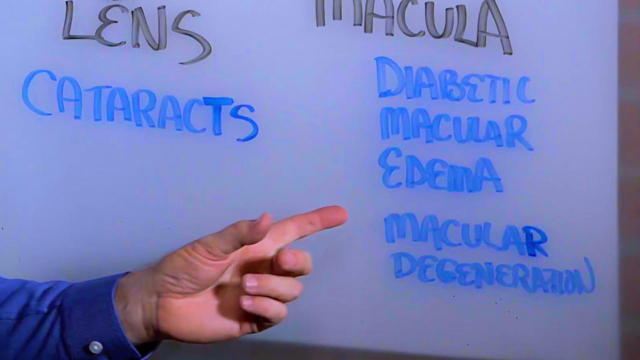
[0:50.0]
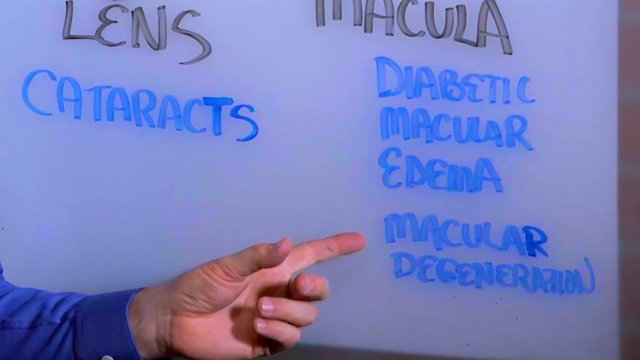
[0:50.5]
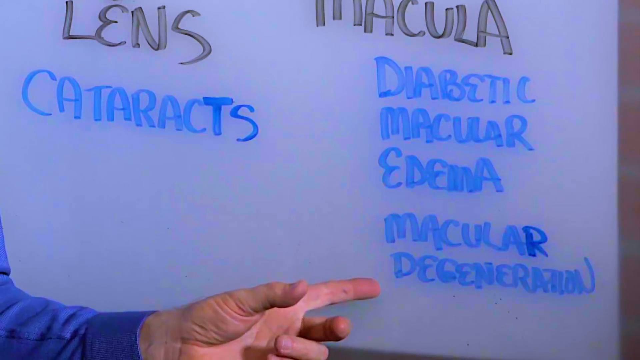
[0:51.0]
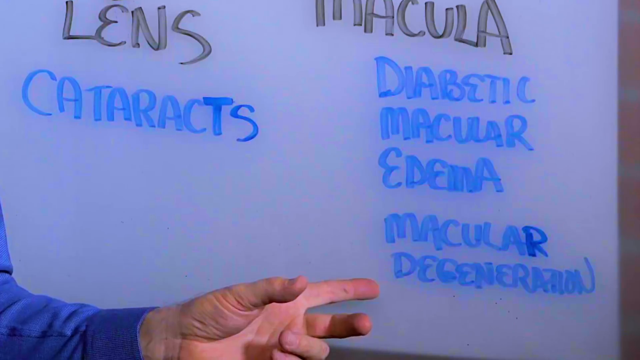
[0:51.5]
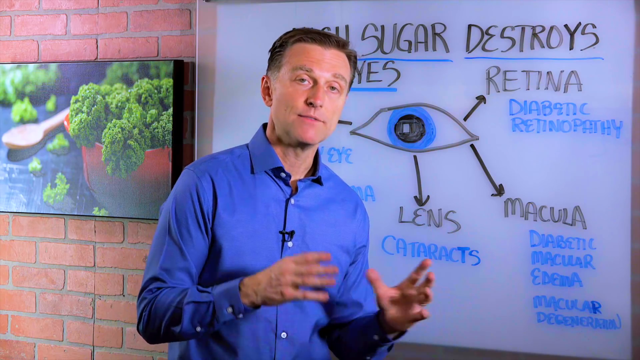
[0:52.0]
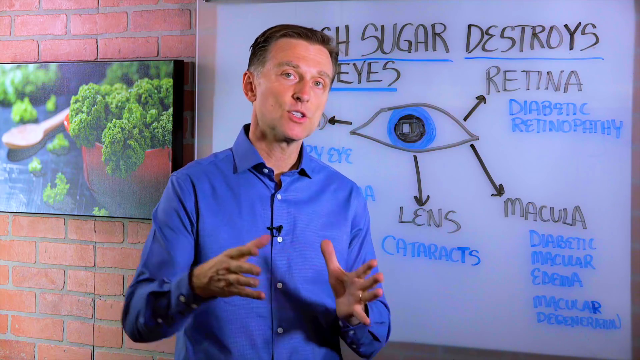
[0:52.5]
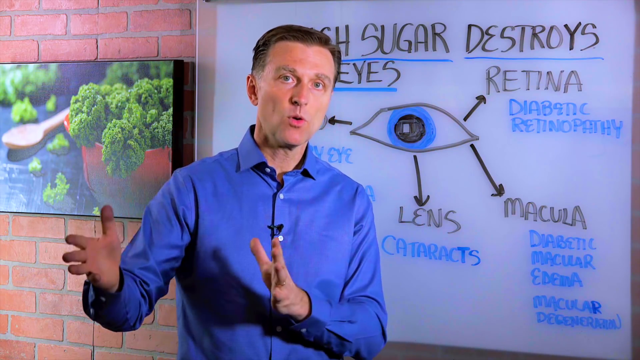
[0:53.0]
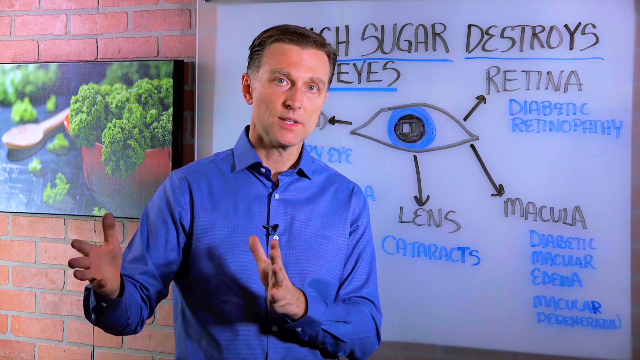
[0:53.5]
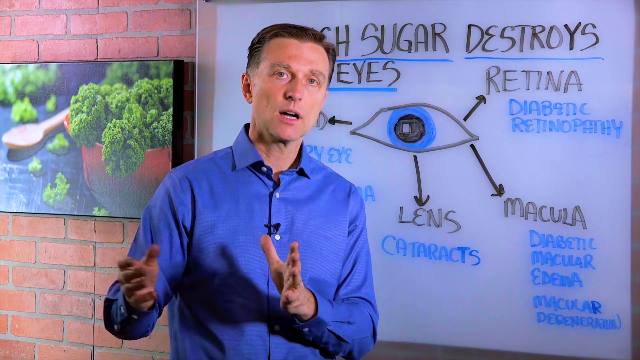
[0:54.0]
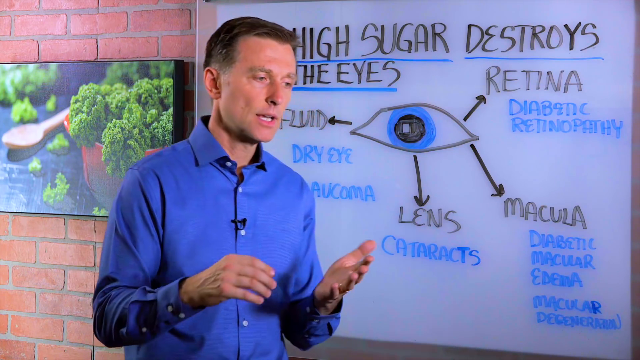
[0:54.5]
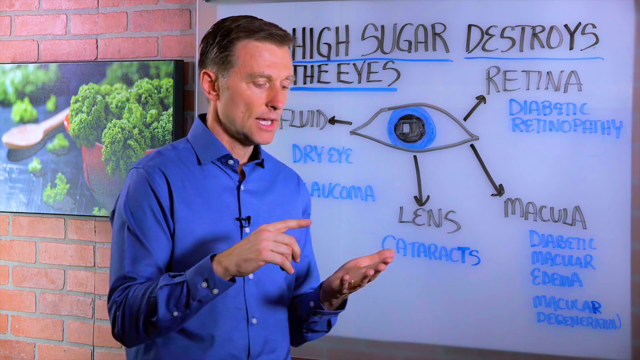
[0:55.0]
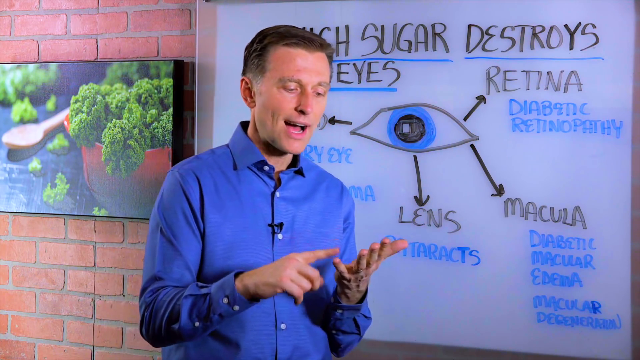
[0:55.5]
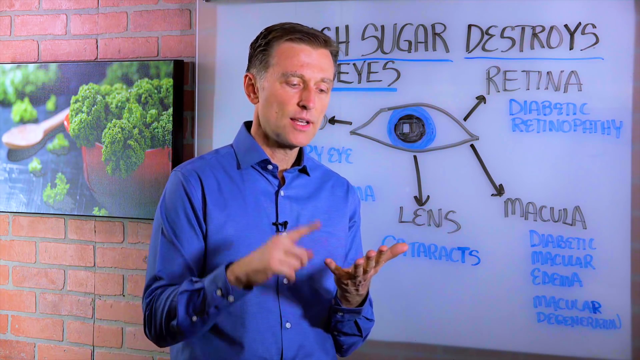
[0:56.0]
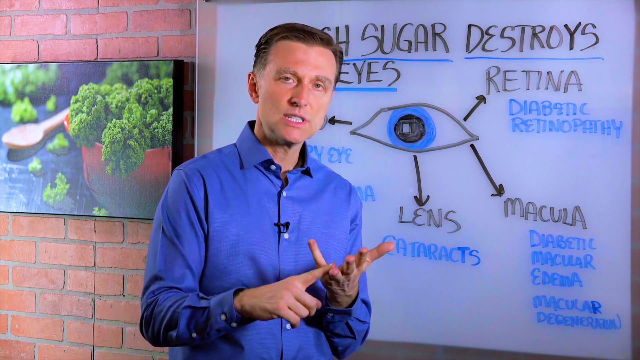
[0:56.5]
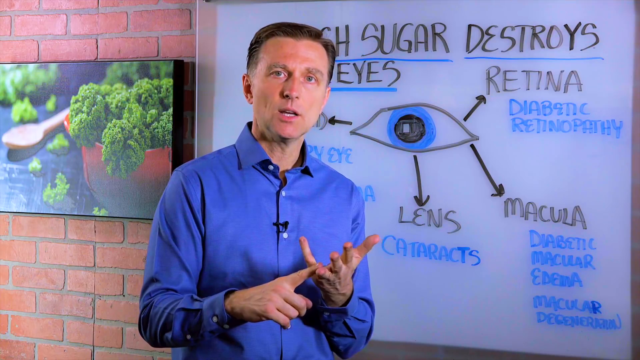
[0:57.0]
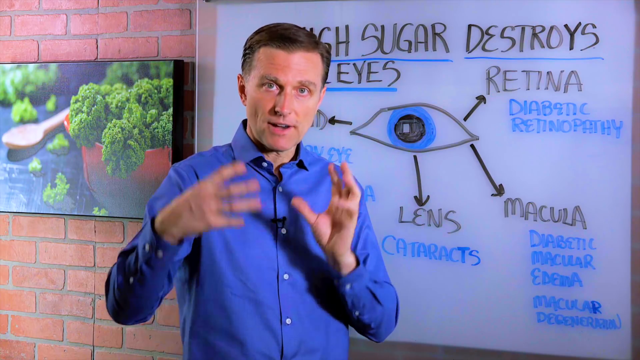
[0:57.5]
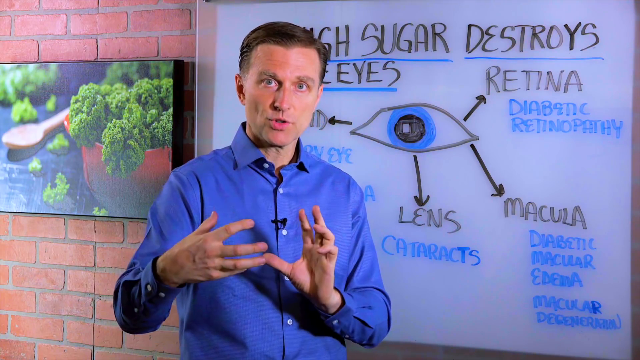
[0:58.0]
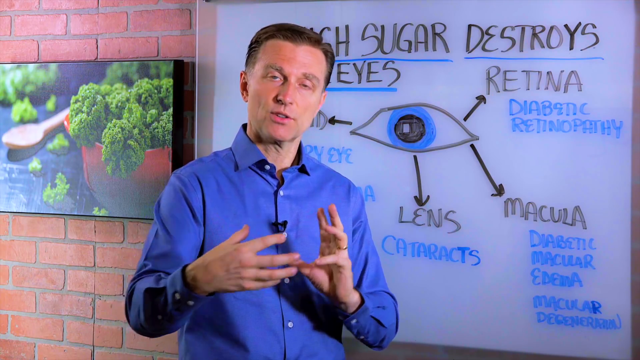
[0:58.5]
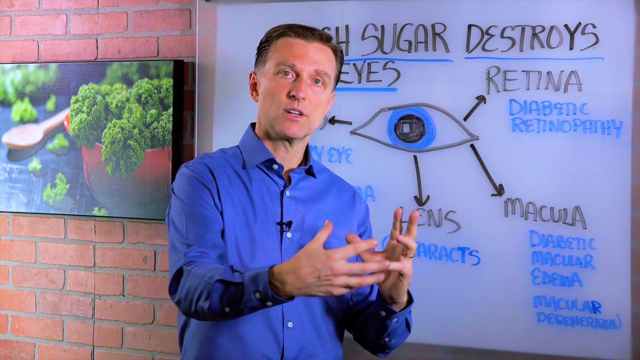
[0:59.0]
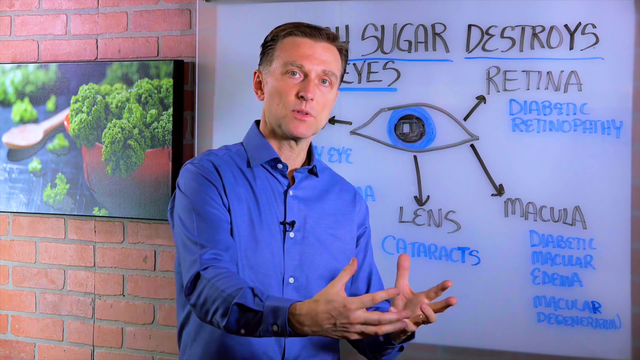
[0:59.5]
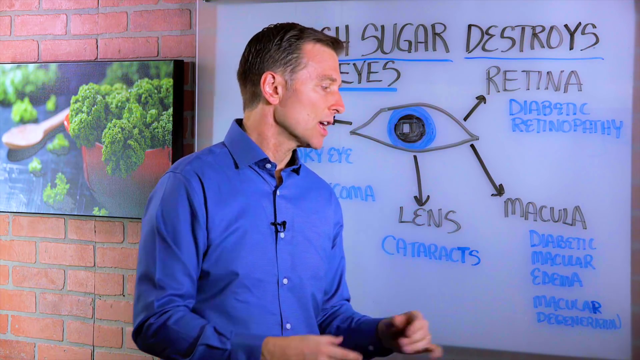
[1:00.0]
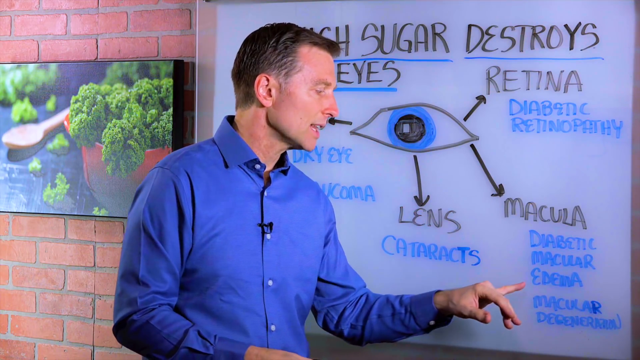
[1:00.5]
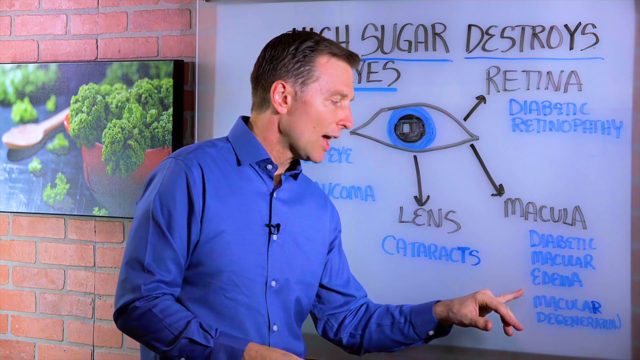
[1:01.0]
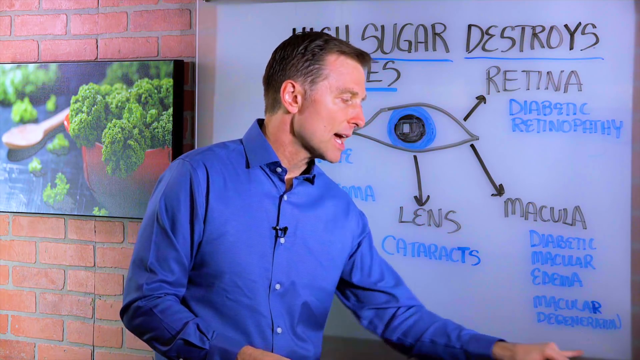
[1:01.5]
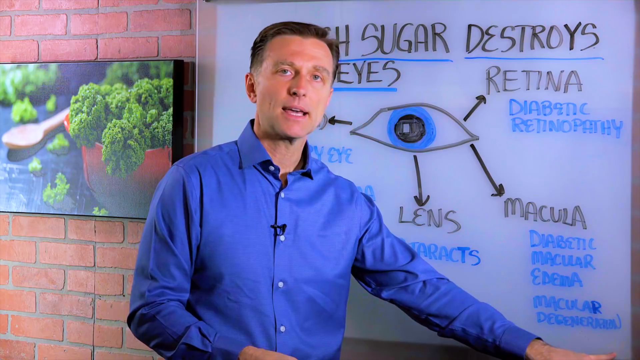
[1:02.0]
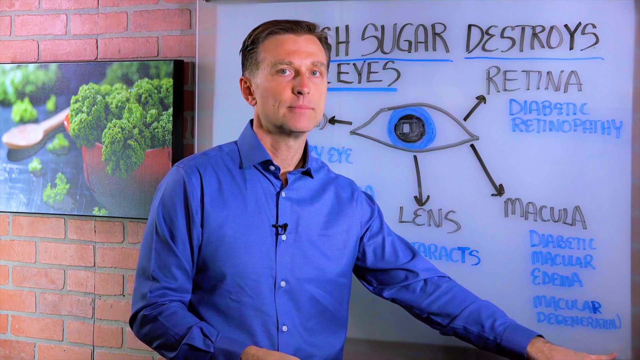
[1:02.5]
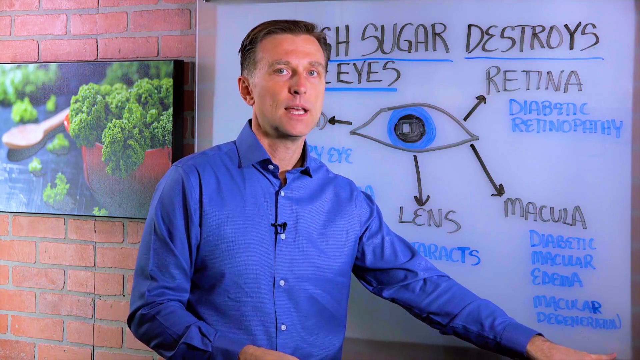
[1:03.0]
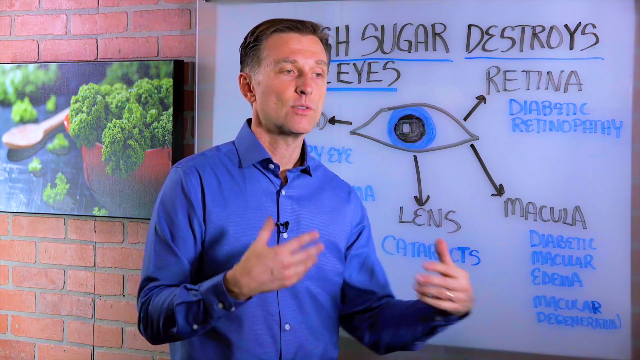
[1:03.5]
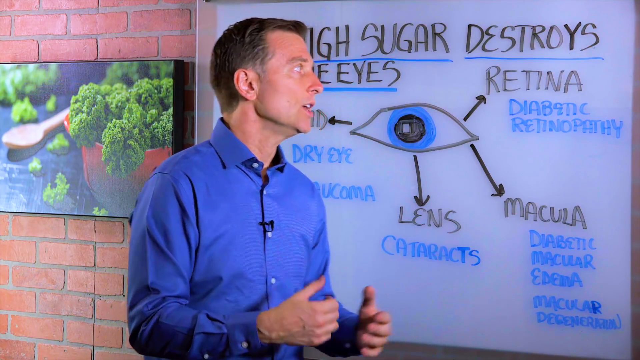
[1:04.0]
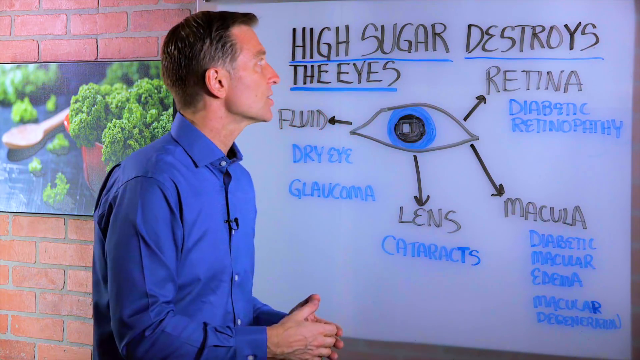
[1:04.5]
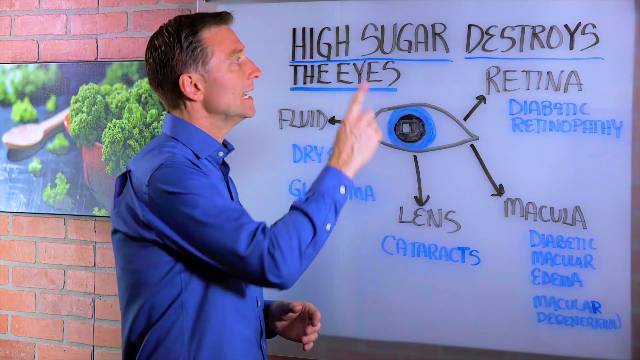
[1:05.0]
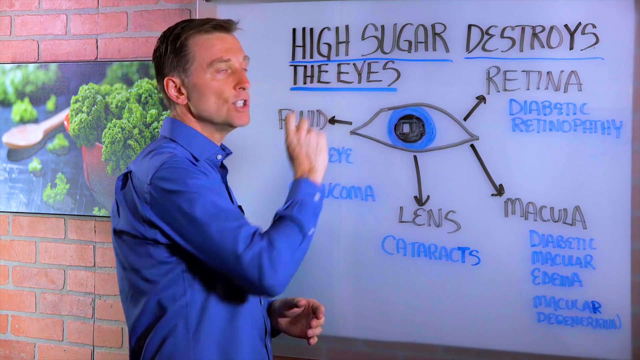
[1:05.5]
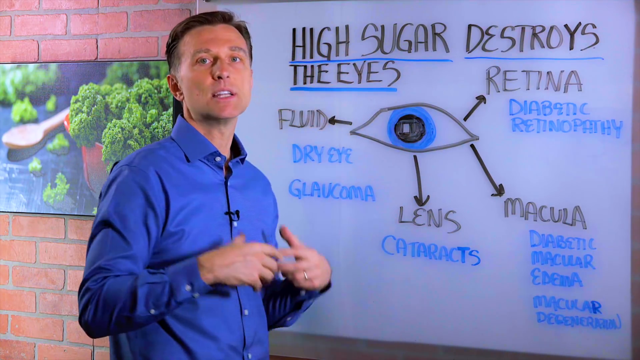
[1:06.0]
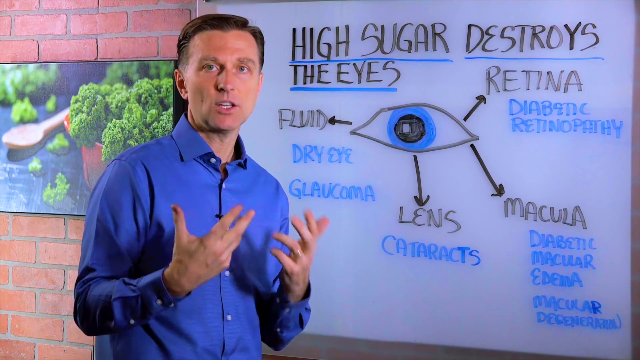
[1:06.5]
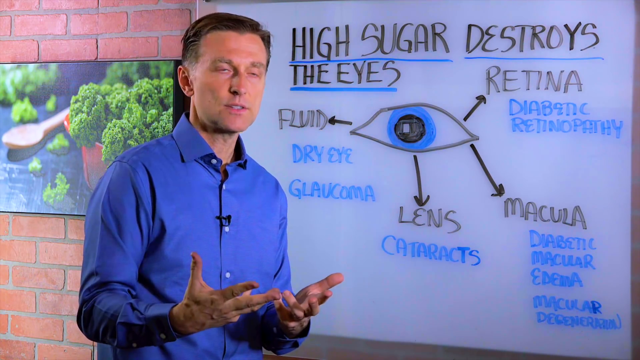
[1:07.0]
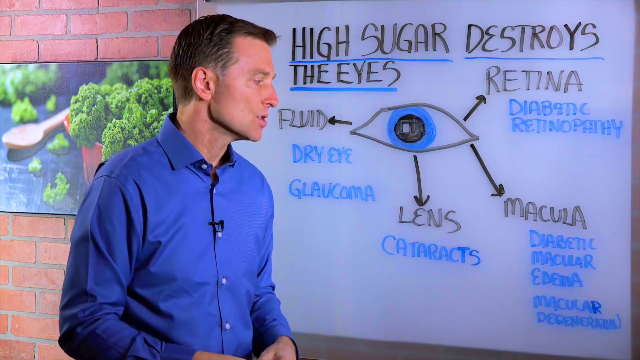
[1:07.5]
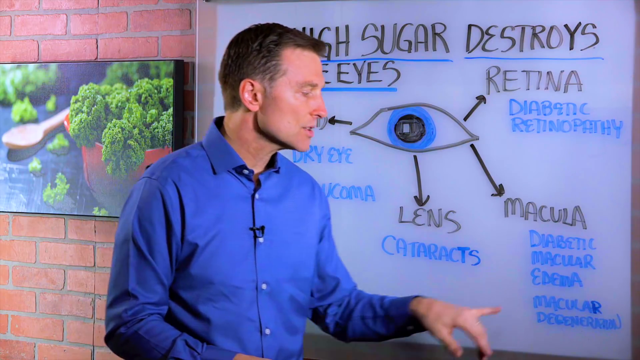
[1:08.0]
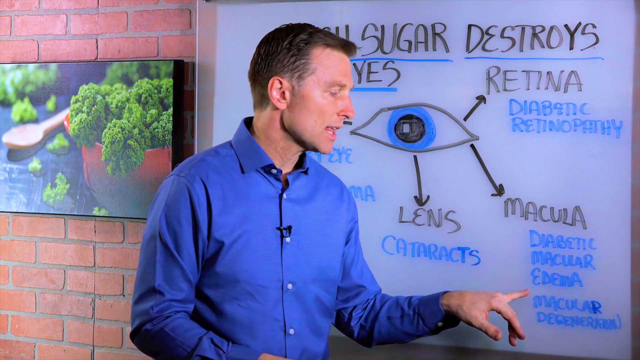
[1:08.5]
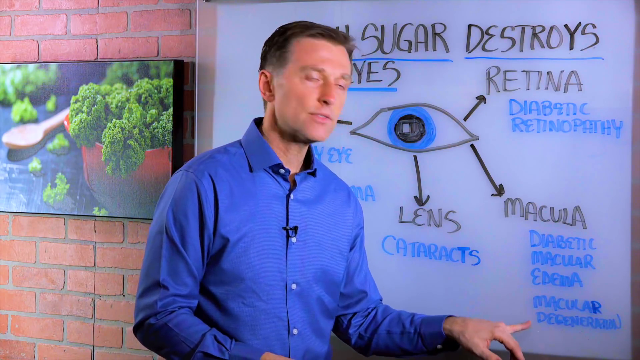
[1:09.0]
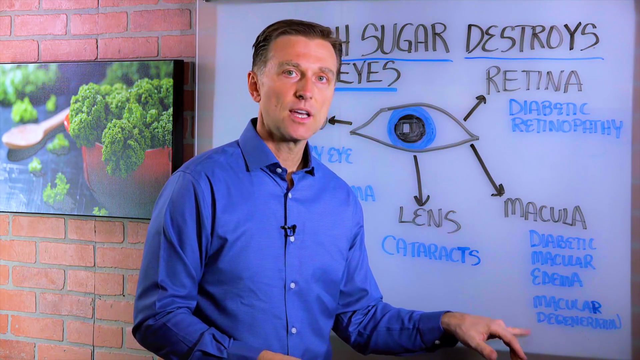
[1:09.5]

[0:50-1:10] Dr. Berg holds his hands parallel, then uses the pointer finger of his left hand to count points on his right. He looks down at the word "macula" on the whiteboard behind him, below which "diabetic macular edema" is written in blue dry erase marker. He looks at the eye, then holds a marker in his right hand and taps the word "retina." He puts the marker down and circles his finger around the word "edema." He points to the words "high sugar" with his right hand, then brings his left hand down, palm toward the camera, and uses his pointer finger to point at "macular degeneration," written in the lower right corner of the whiteboard.